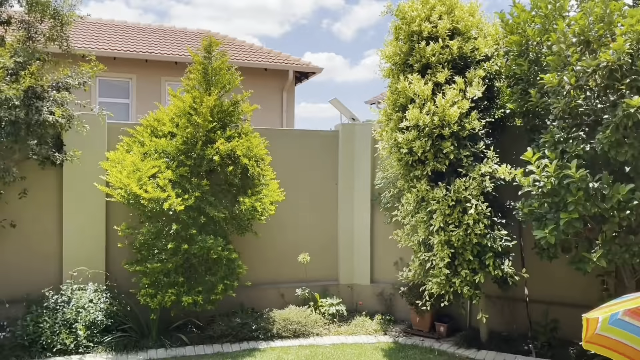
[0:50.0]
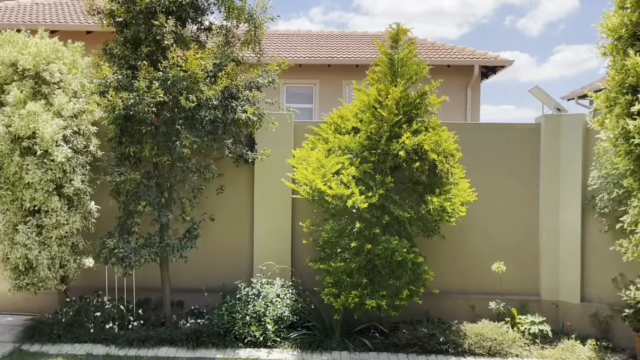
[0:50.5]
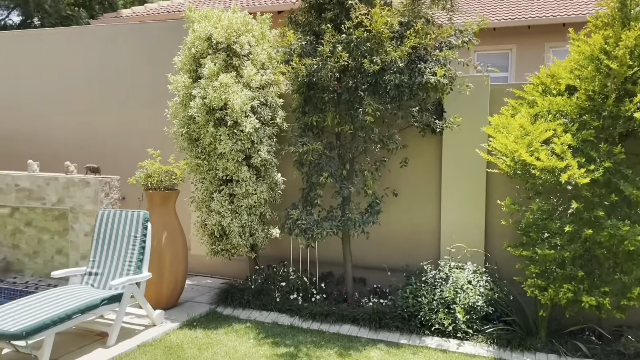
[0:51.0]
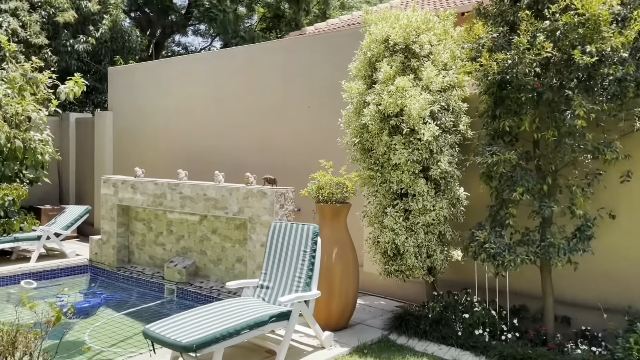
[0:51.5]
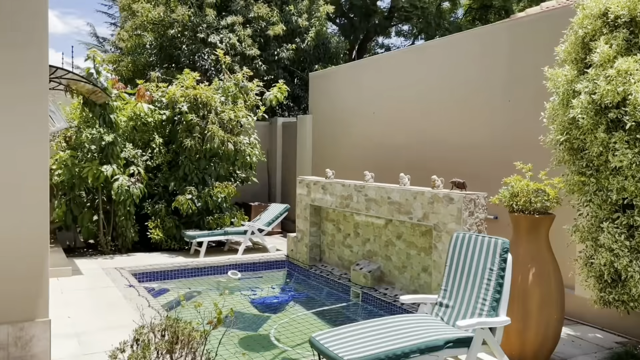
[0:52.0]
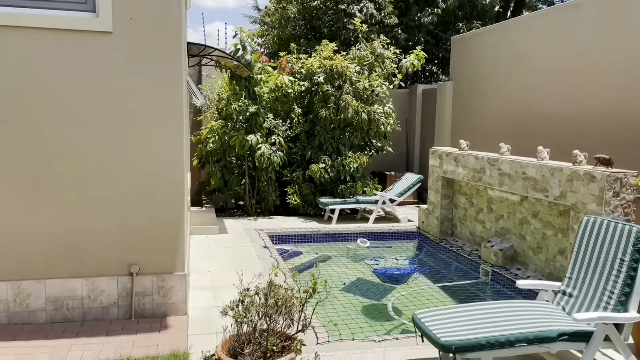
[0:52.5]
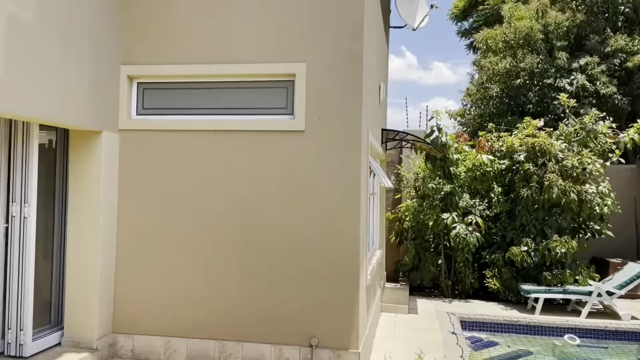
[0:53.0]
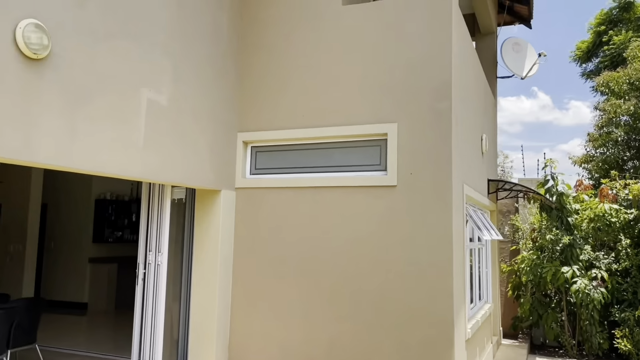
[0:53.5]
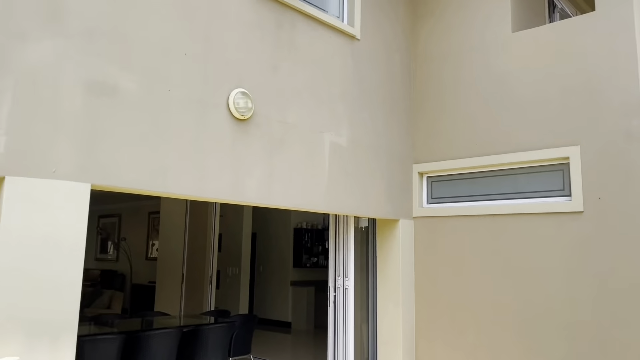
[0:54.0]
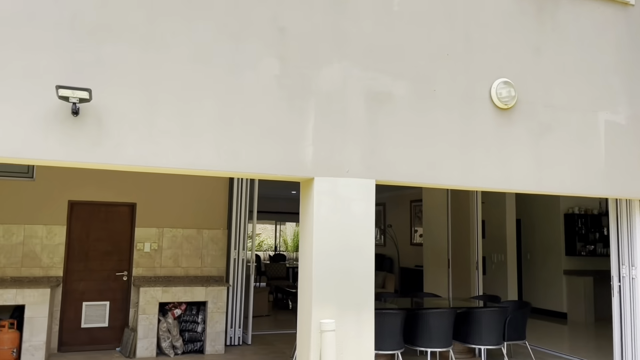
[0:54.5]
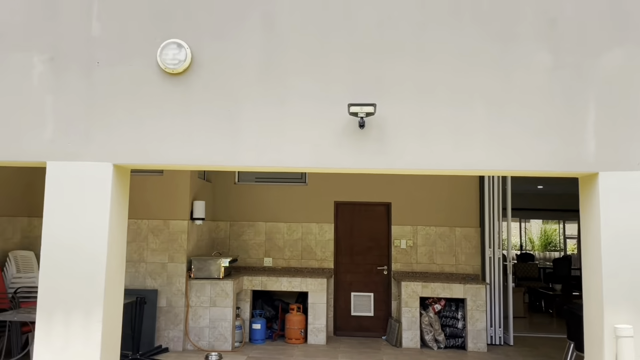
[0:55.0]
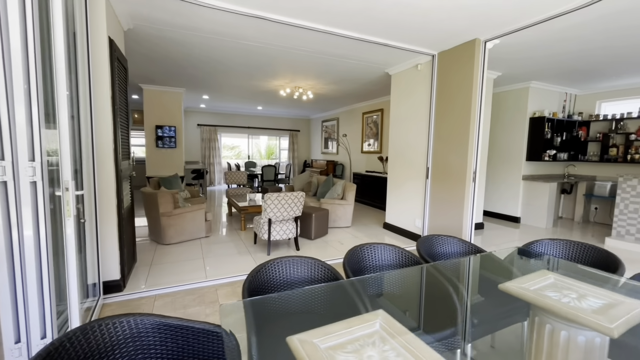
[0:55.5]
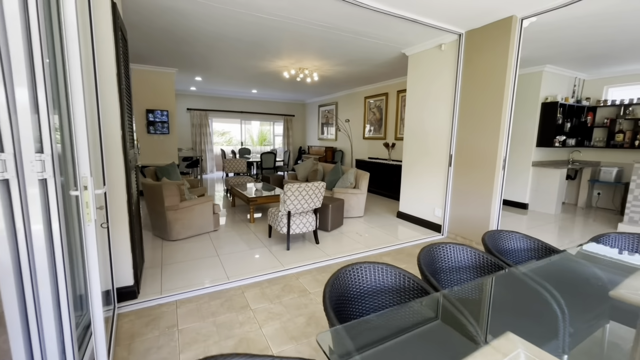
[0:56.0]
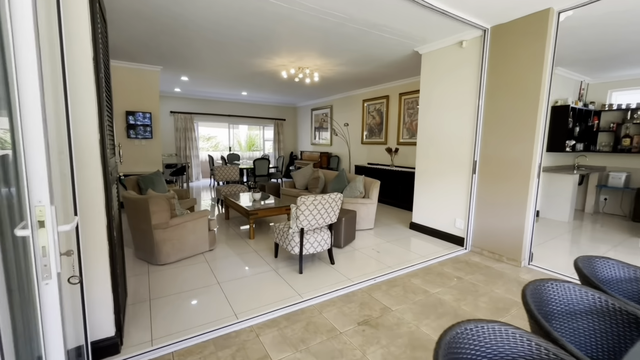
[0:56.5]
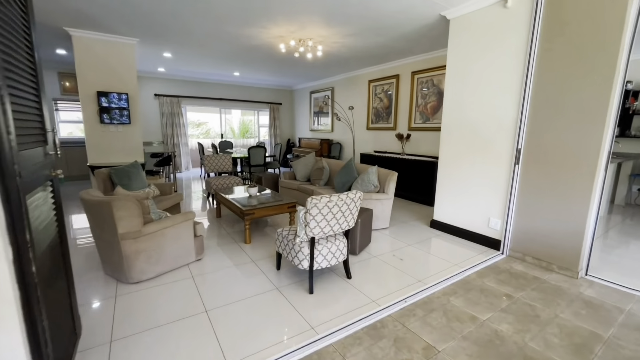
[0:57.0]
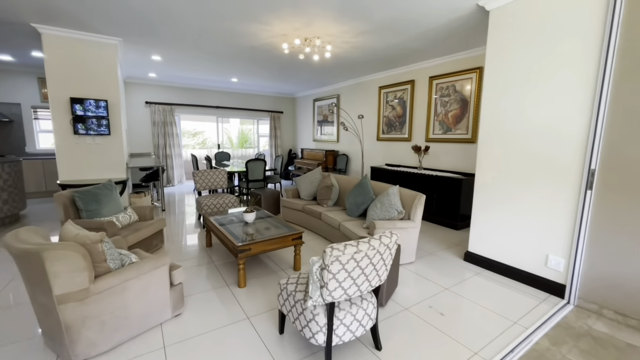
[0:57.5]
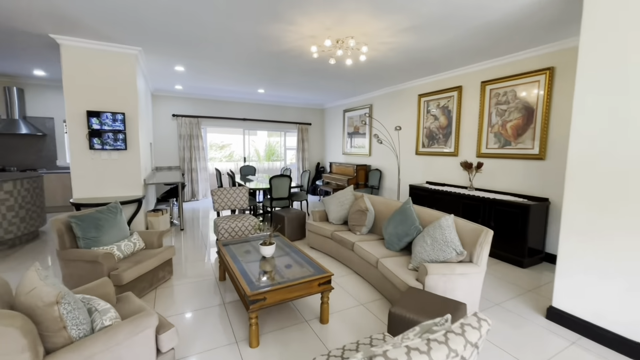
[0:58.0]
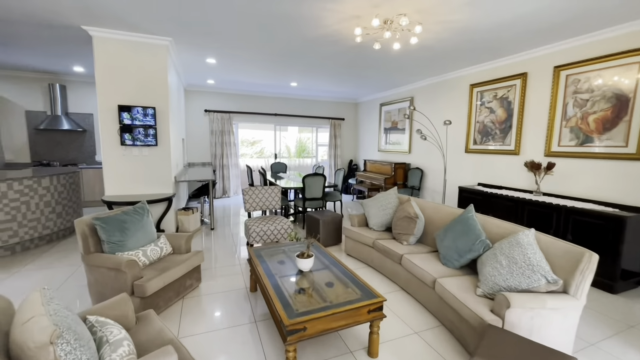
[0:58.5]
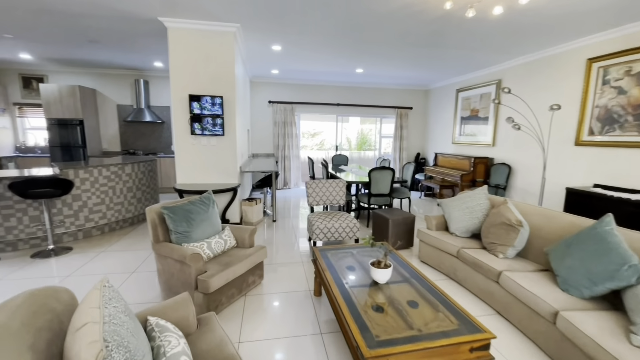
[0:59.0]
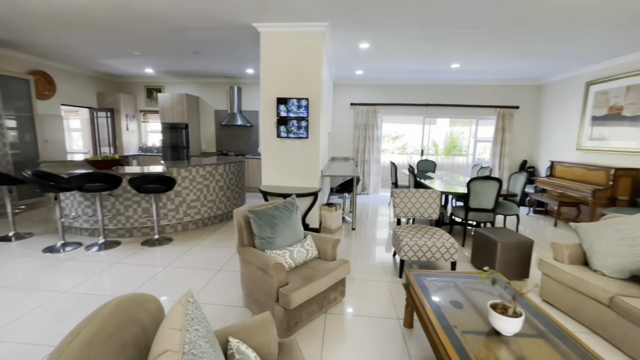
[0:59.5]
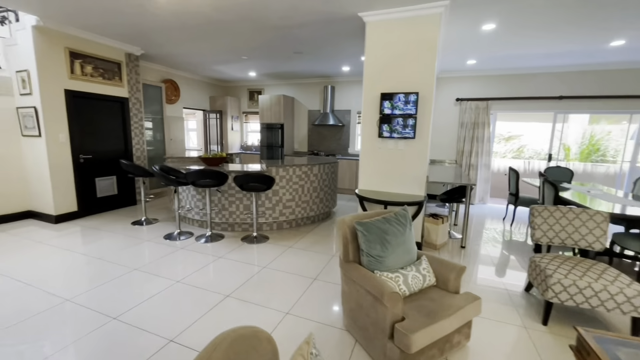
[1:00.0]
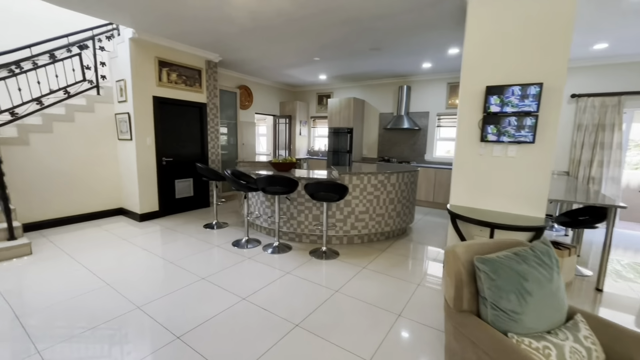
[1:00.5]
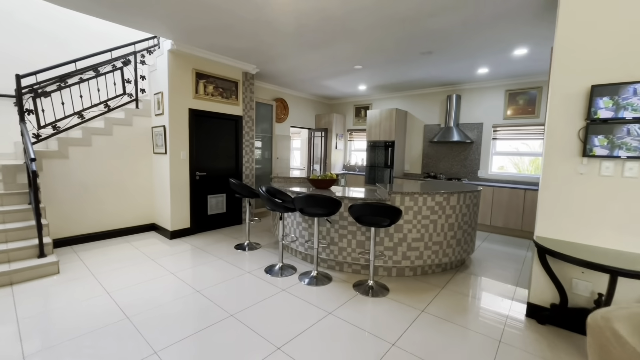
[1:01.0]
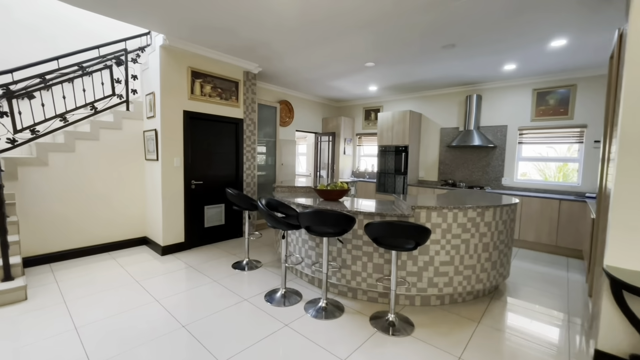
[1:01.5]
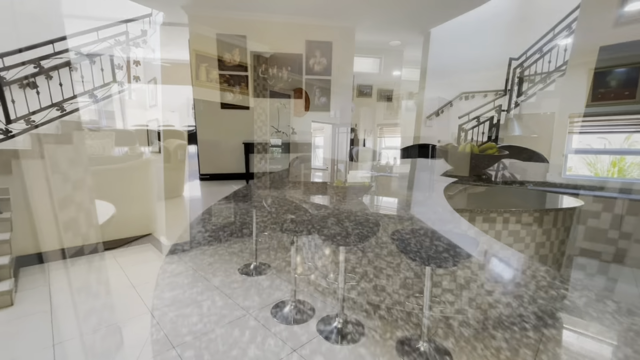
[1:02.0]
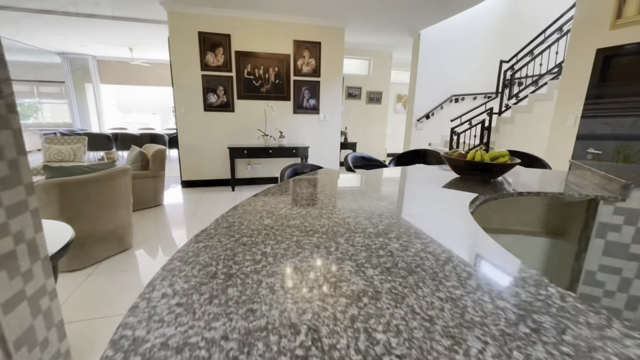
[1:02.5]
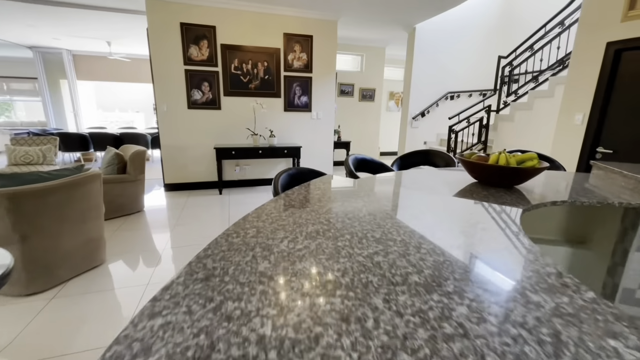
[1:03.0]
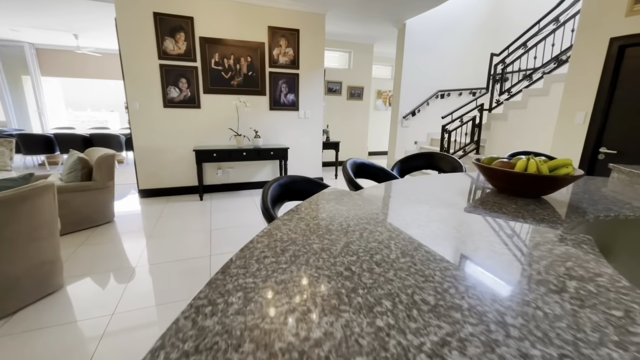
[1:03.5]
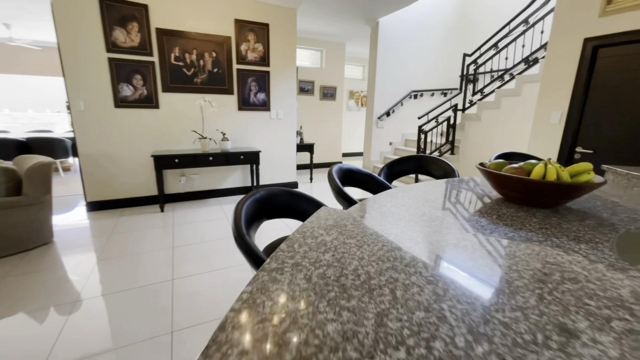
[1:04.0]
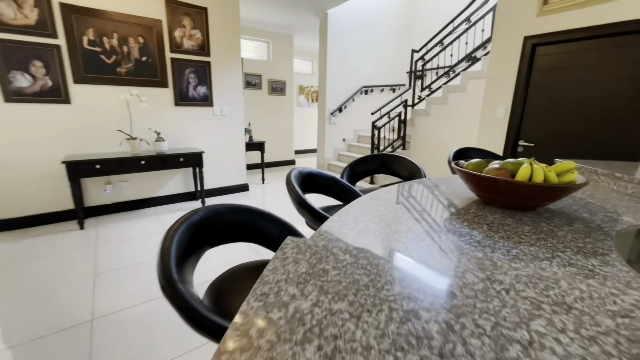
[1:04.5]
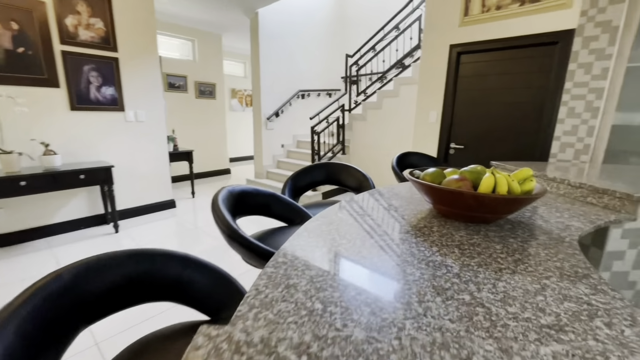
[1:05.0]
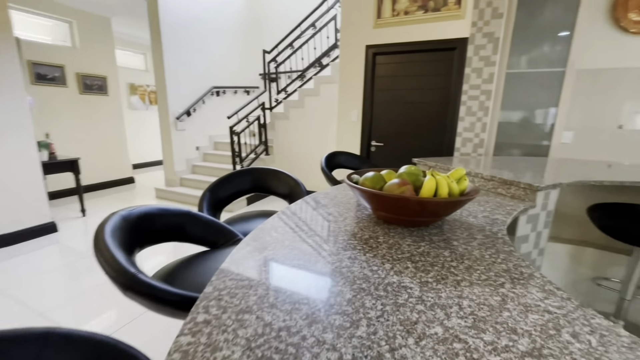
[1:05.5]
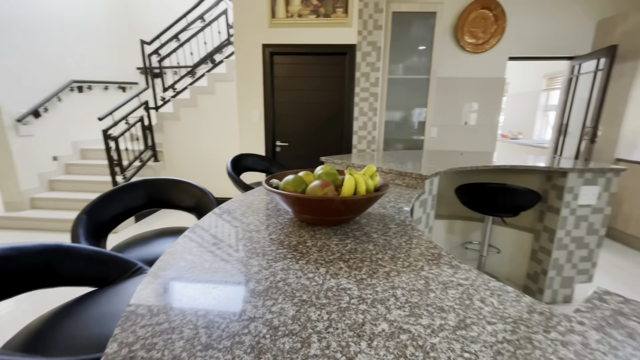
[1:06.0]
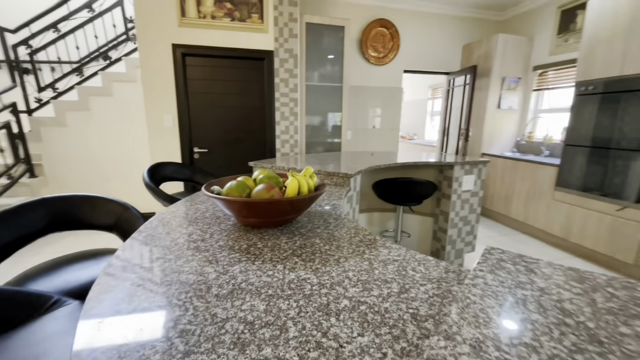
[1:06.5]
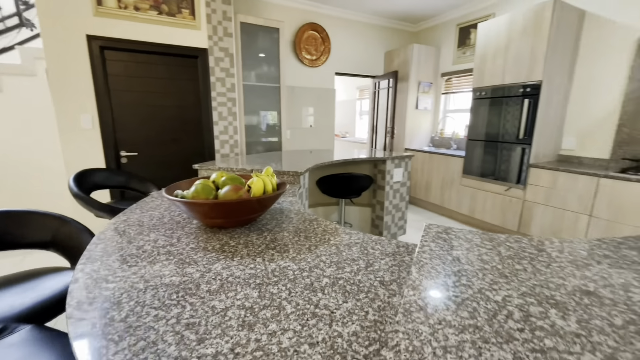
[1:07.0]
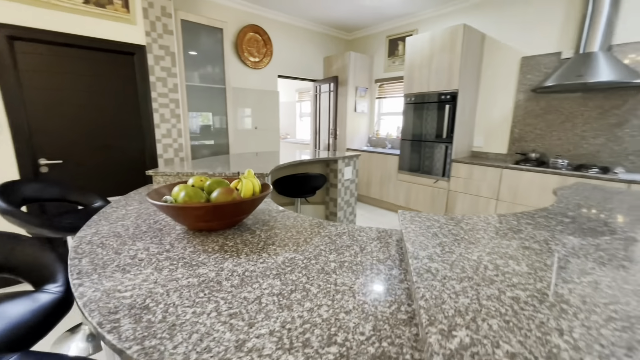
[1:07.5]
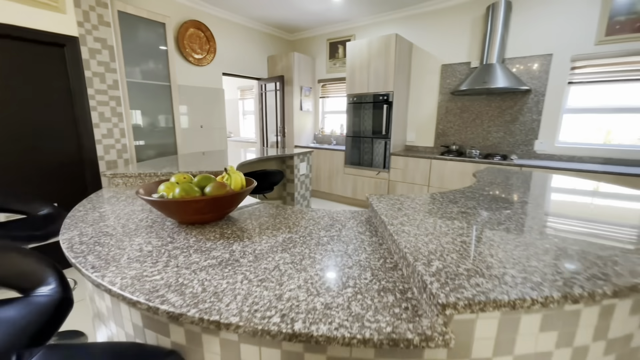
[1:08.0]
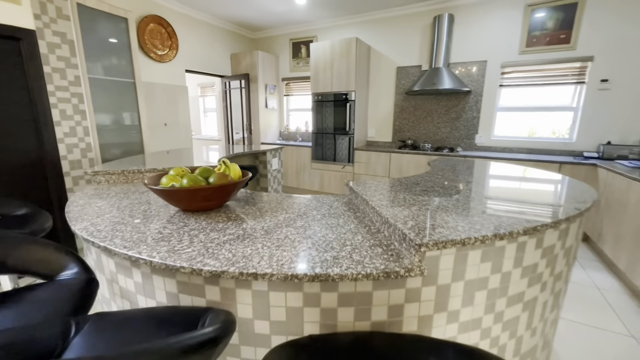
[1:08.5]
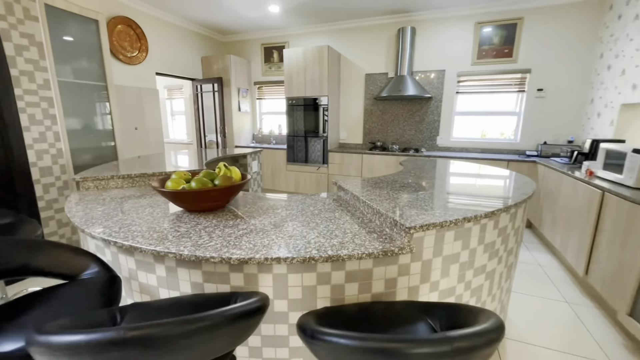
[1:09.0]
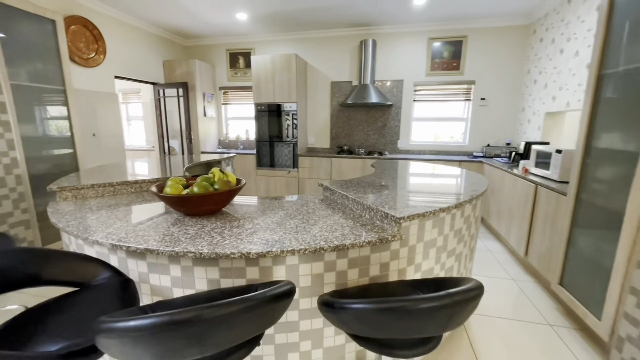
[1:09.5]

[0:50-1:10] Trees are visible outside the house, and there is a little pool with one chair to the left and one to the right. The camera does a 360 and then cuts to the inside of the house, to the living room area and then the kitchen, passing the kitchen counter where bananas and other fruit are in a bowl. It does another 360 view of the kitchen. A white microwave is visible, and there seem to be two little frames in the kitchen that look like they could be paintings. A kind of round, shiny, orange object is hung up high. A railing runs along the stairs to the upper floor; from the kitchen there is a thin black railing with a design inside it that keeps a very rectangular shape. The whole kitchen is white, with certain striped areas that look like white and grey tiling.